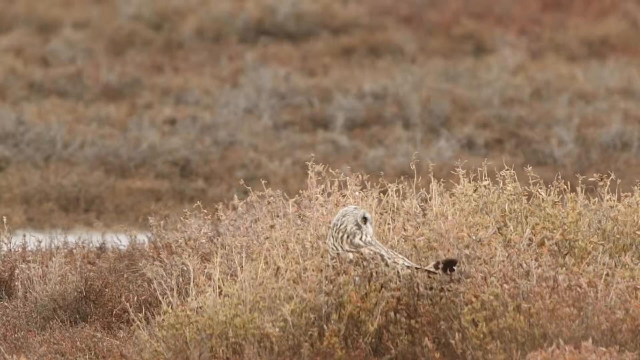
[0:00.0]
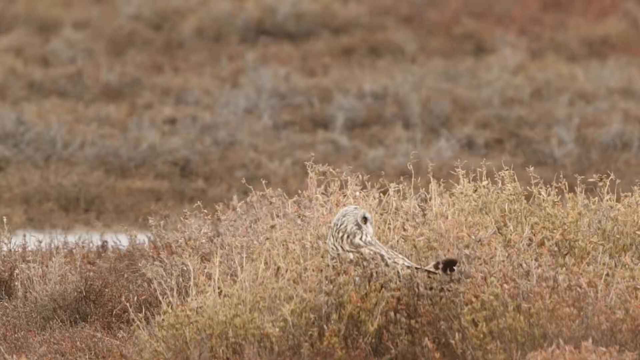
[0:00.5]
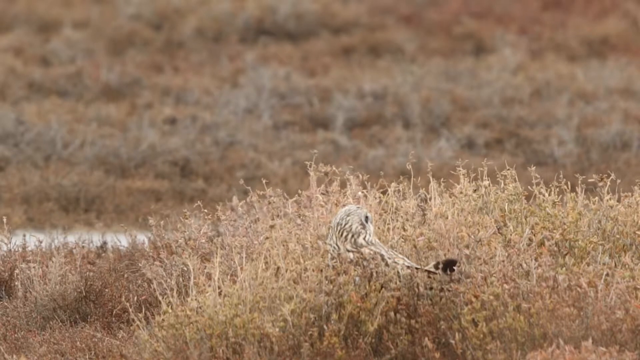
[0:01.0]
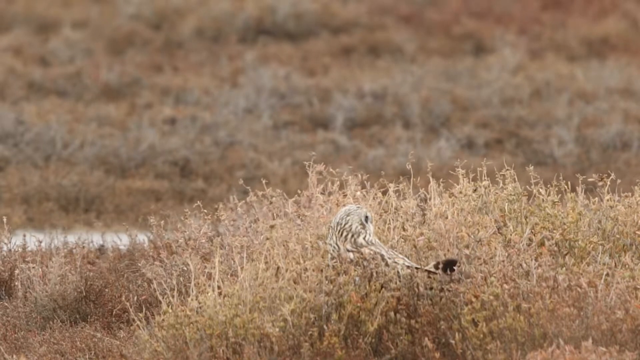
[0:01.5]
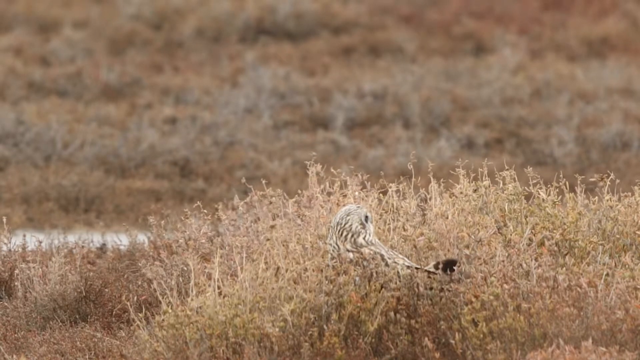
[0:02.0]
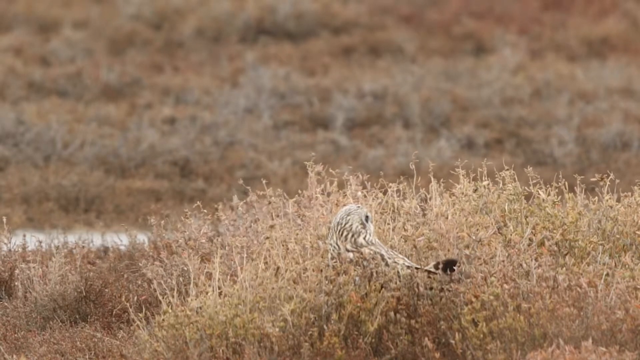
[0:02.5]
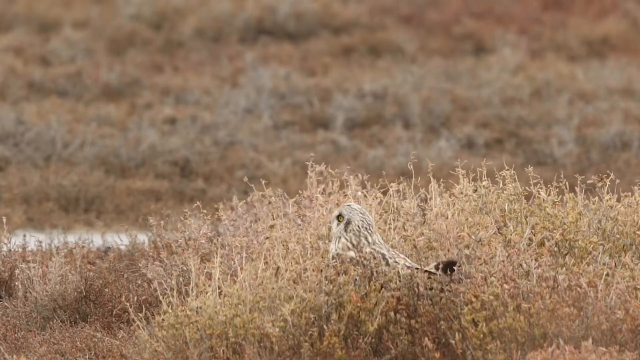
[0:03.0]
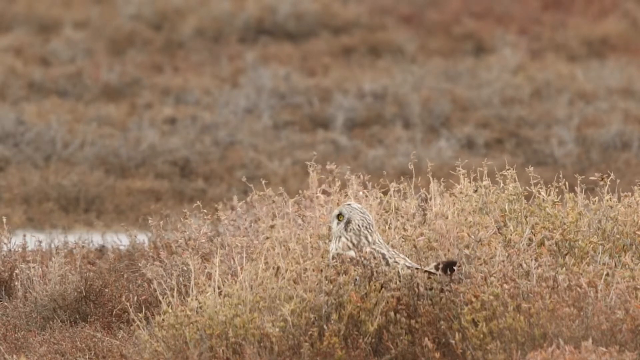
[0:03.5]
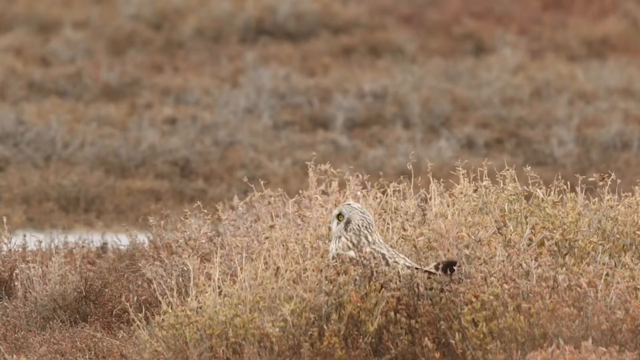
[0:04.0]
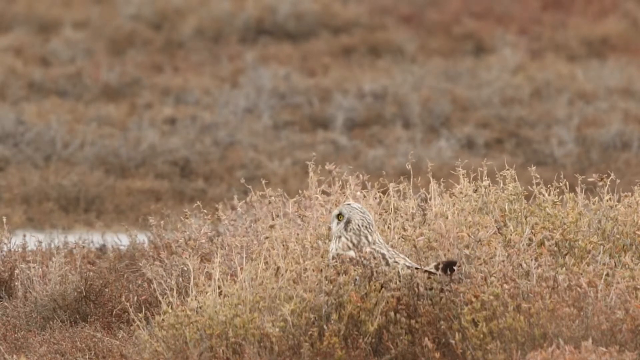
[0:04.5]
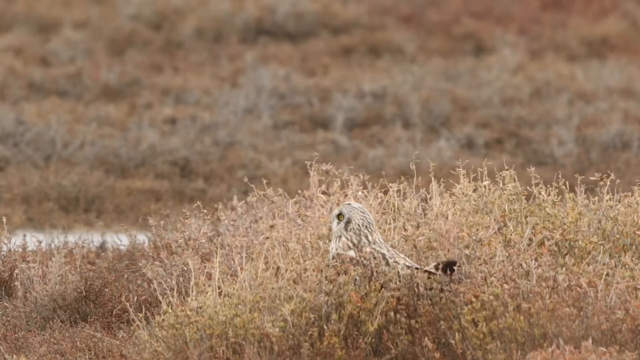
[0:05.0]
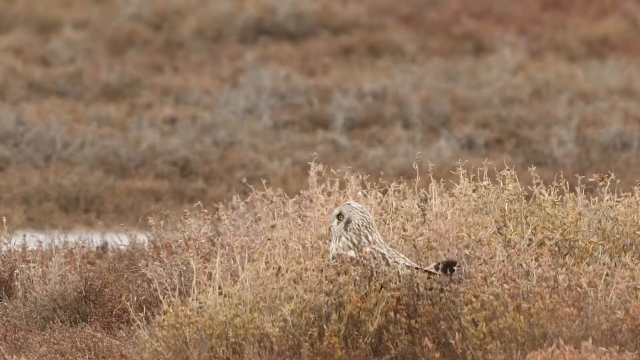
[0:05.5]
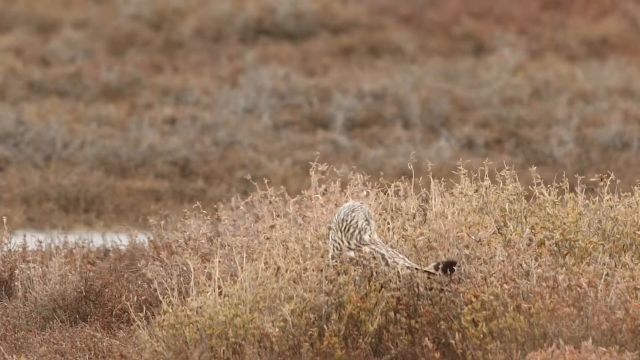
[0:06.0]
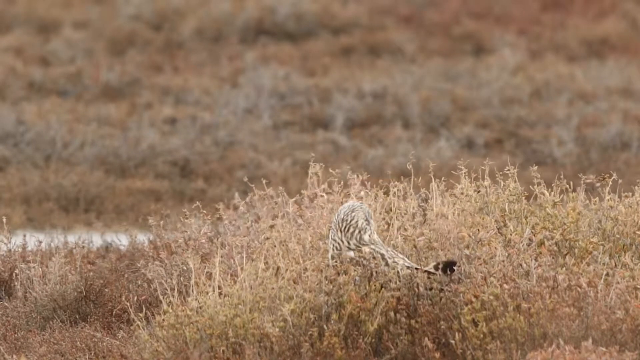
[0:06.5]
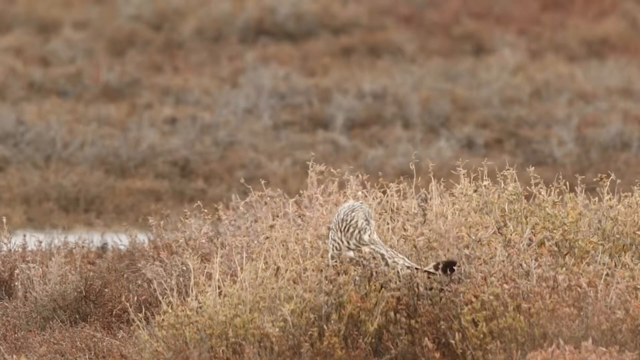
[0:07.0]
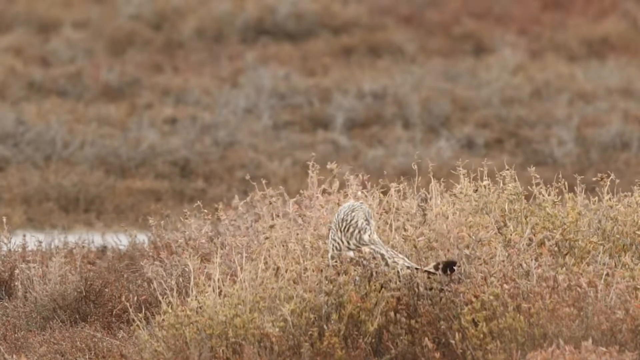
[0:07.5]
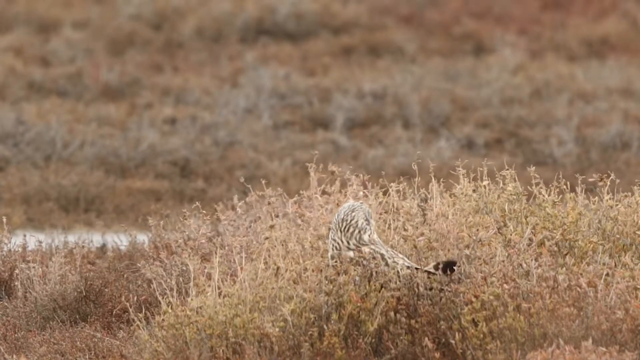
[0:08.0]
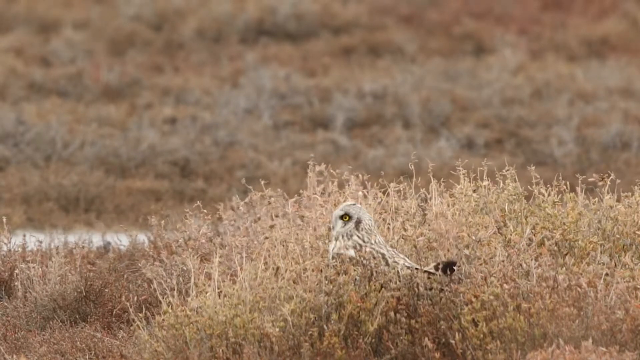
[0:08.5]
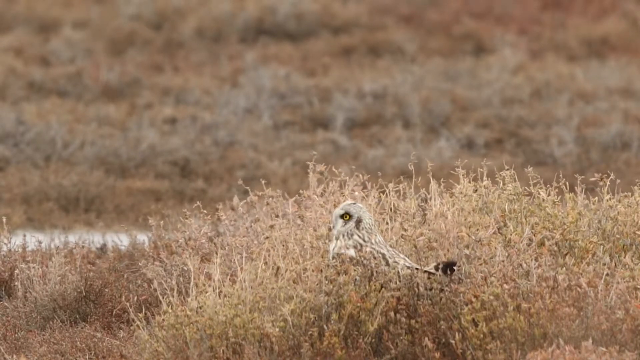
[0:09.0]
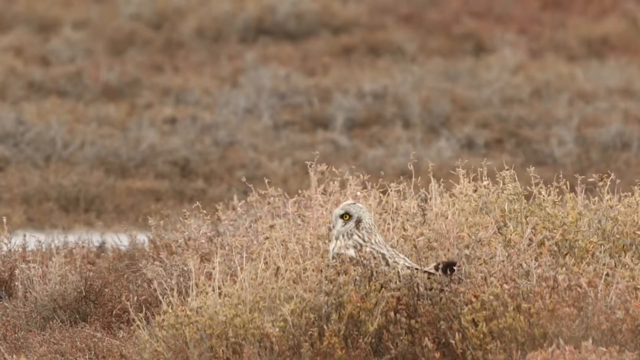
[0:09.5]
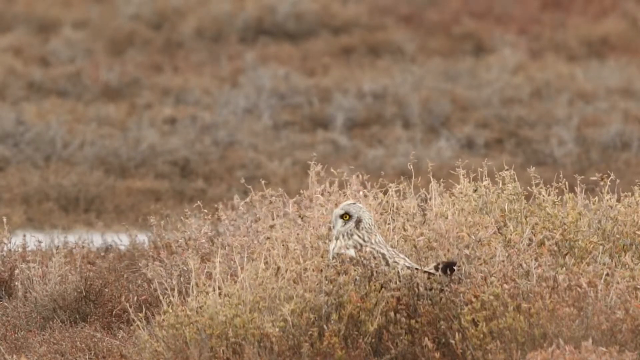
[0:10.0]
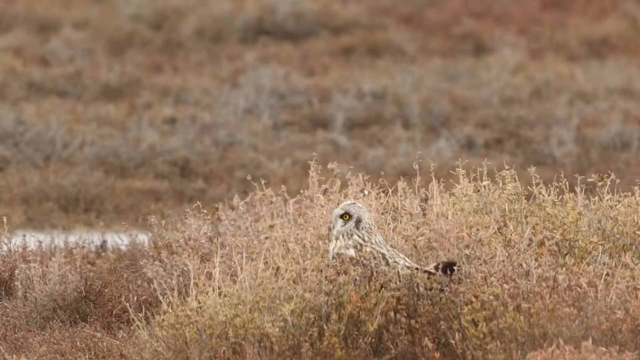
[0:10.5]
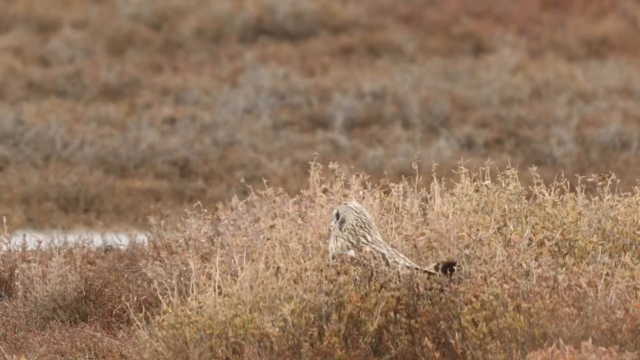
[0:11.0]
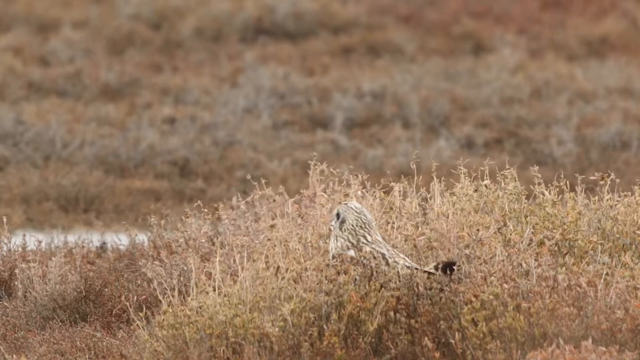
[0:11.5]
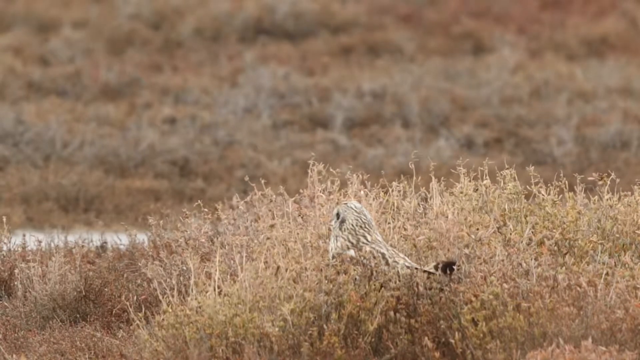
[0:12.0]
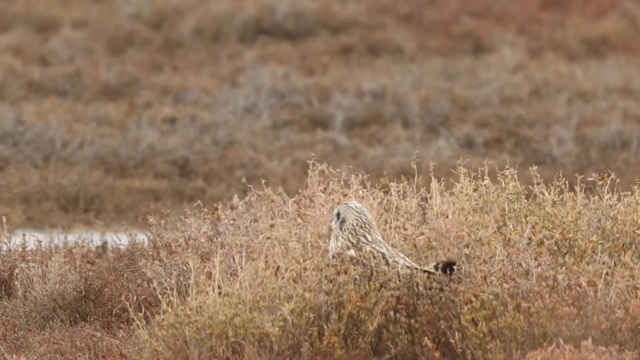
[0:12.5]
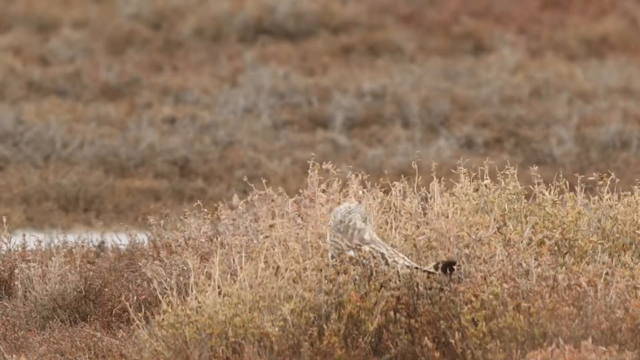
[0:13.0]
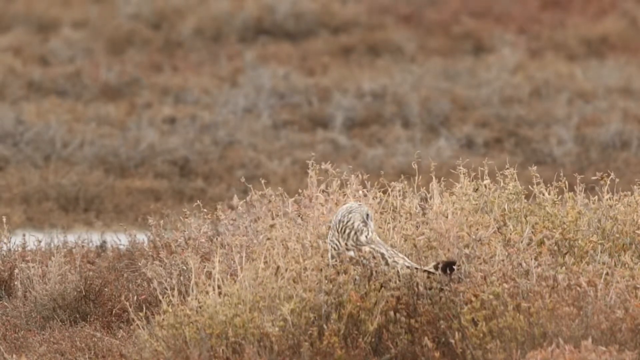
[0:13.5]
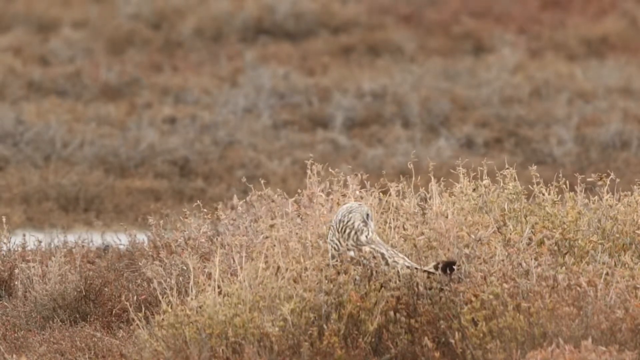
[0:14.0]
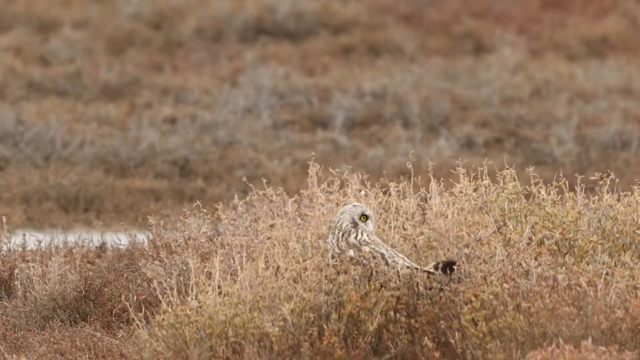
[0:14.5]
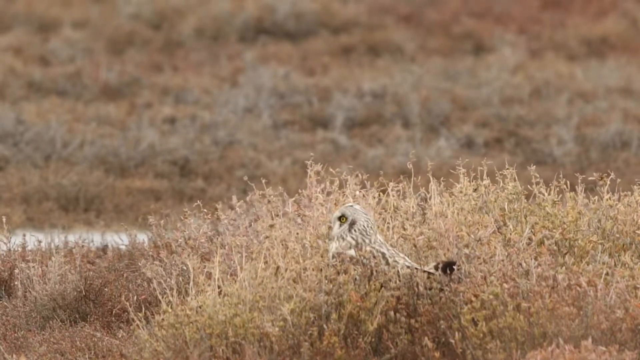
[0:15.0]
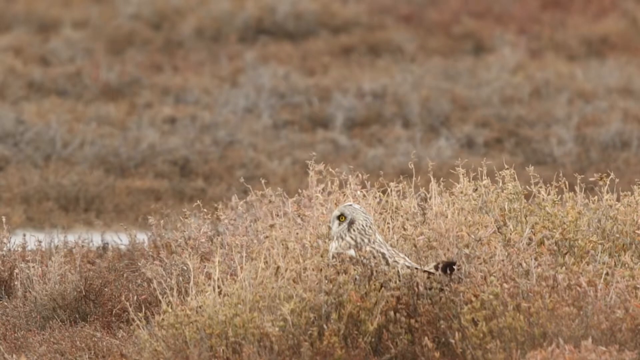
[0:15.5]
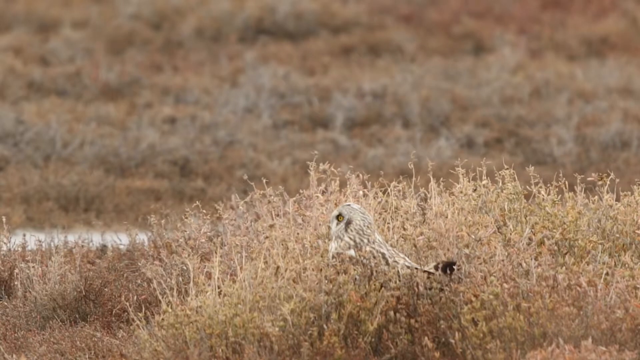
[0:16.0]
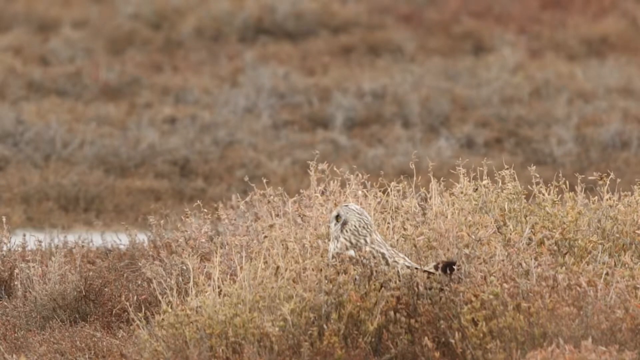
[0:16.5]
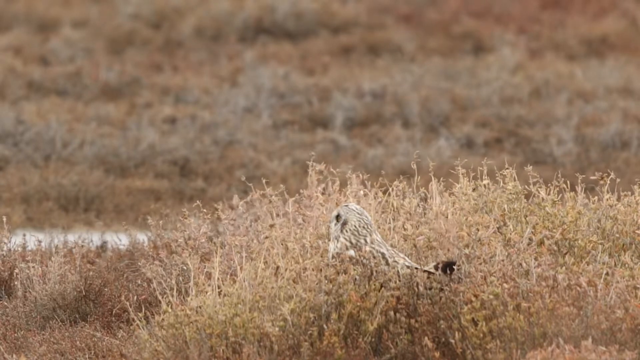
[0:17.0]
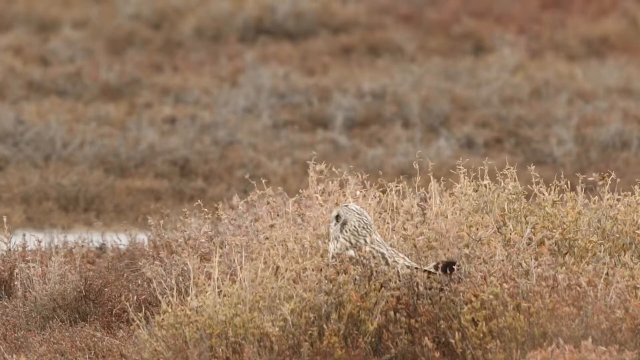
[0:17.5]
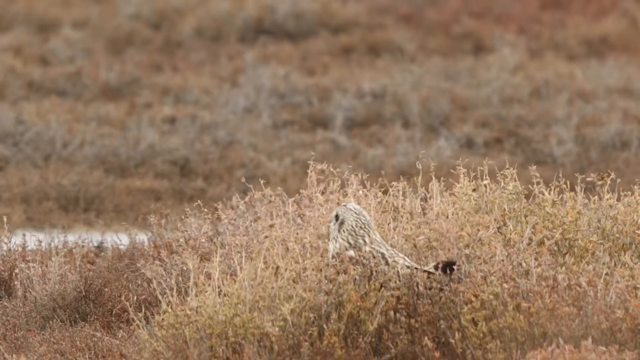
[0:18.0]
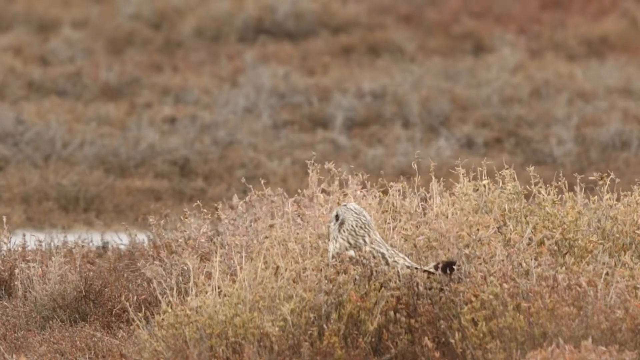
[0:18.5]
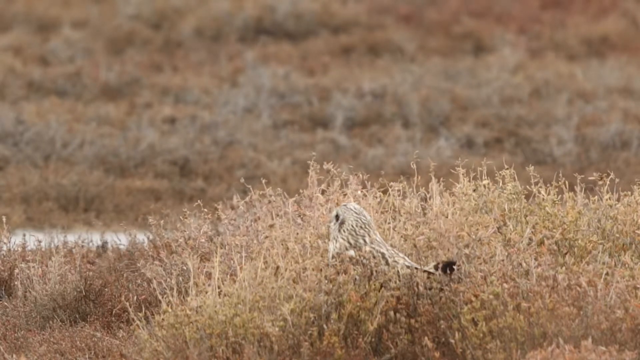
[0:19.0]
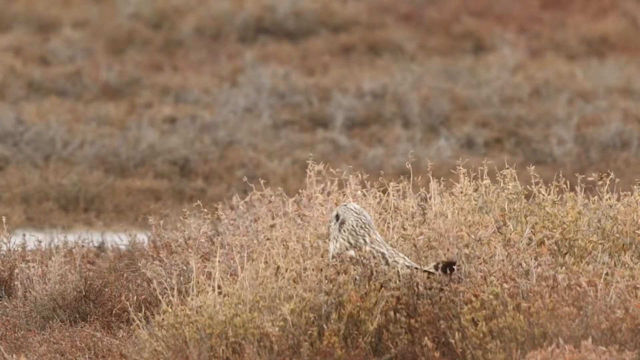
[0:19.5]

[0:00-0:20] A bird sits on the ground and looks around, its head moving to the right and then to the left. It is lying down on very dry, light yellow grass that surrounds it. The bird is a very light gray color with yellow eyes, and it keeps turning its head back and forth from left to right. The background is very blurry. It is slightly windy, and the grass moves around. To the left there appears to be either some water or a road, though it is hard to see. Off in the distance, blurry but apparently a mass of dry grass, light brown to light gray in color.